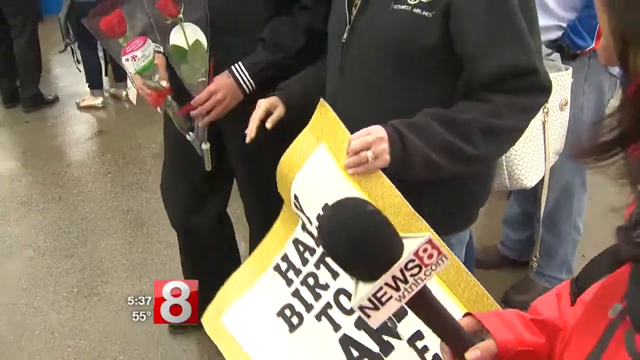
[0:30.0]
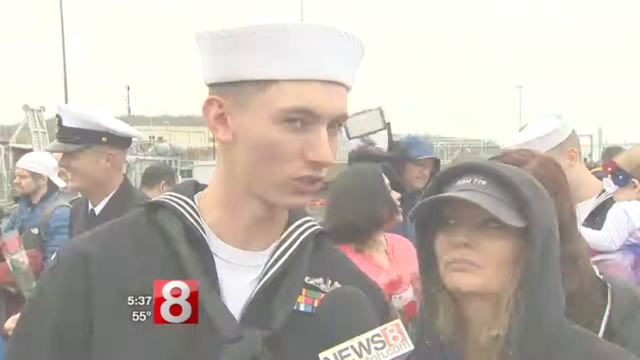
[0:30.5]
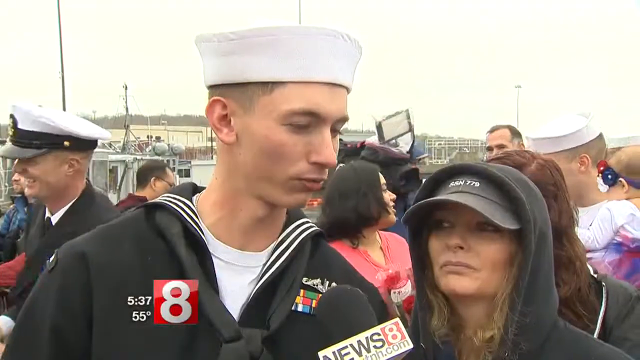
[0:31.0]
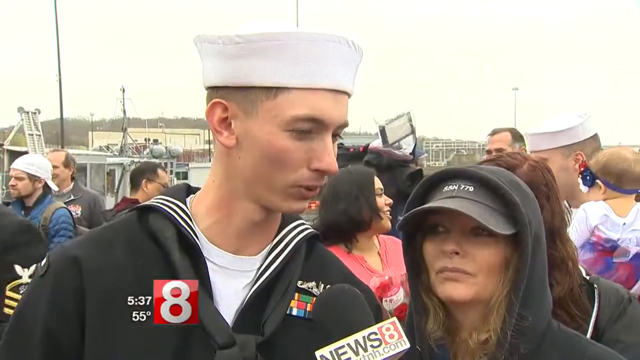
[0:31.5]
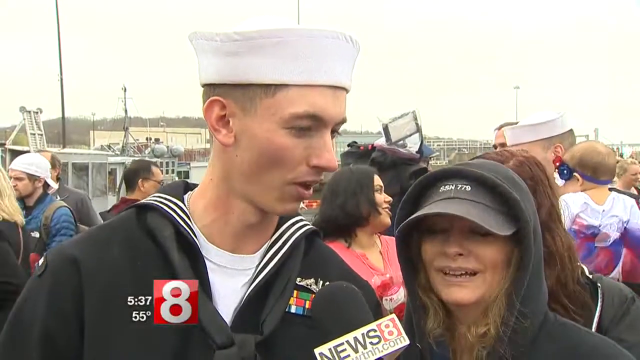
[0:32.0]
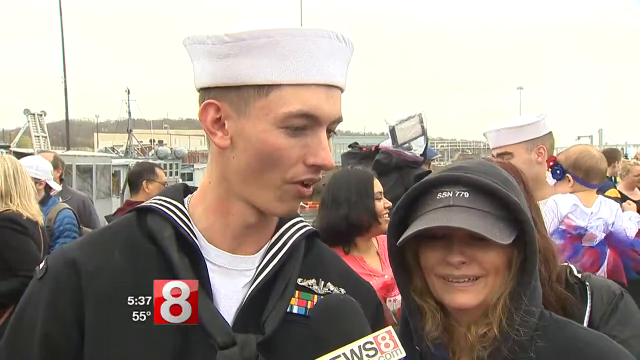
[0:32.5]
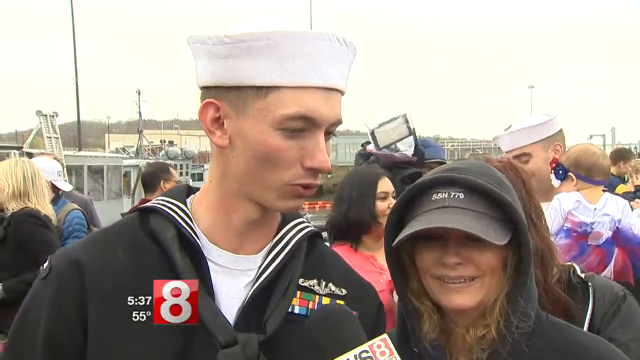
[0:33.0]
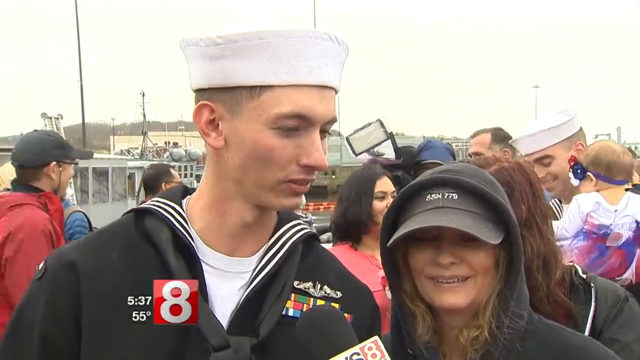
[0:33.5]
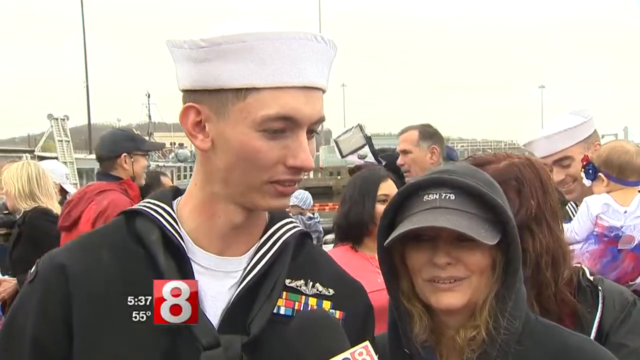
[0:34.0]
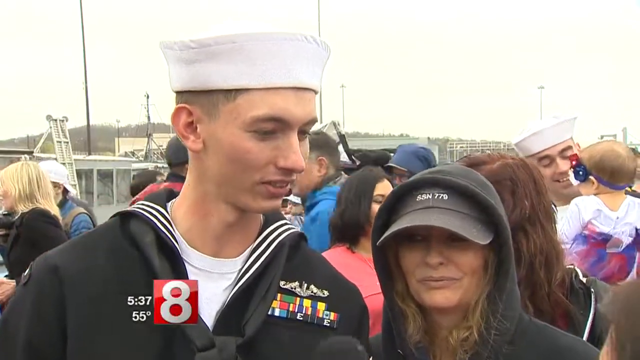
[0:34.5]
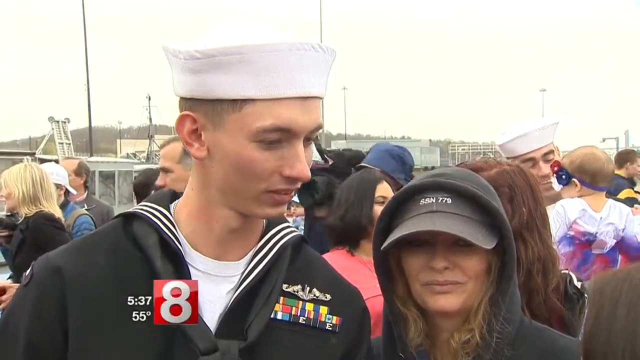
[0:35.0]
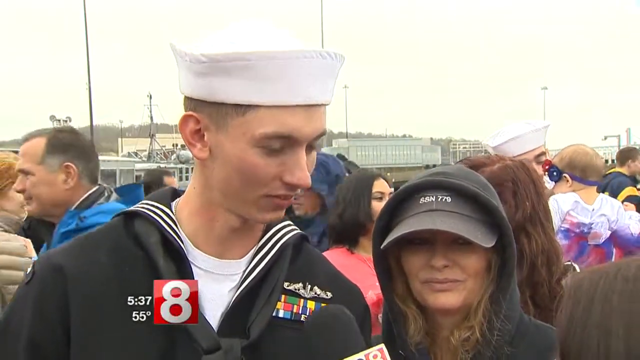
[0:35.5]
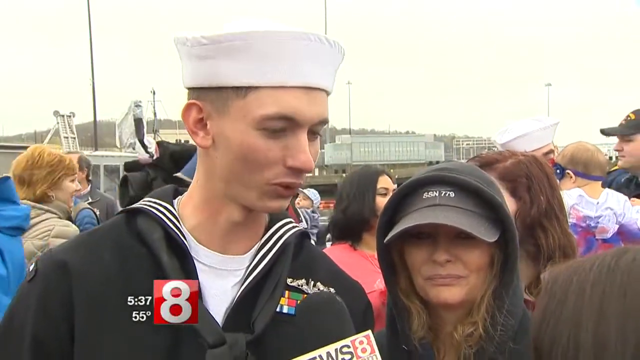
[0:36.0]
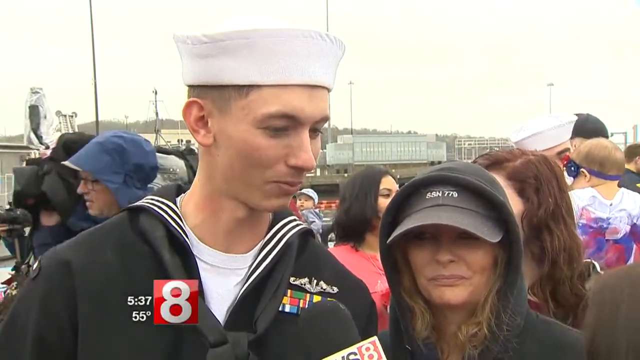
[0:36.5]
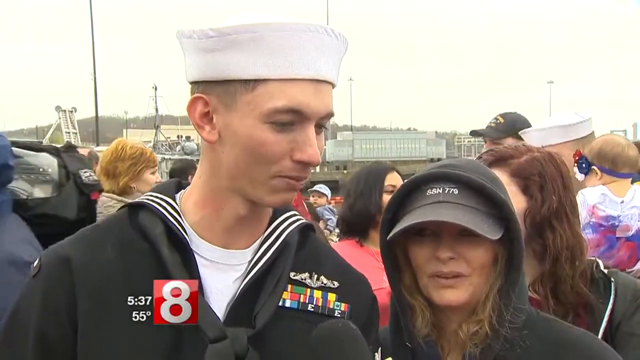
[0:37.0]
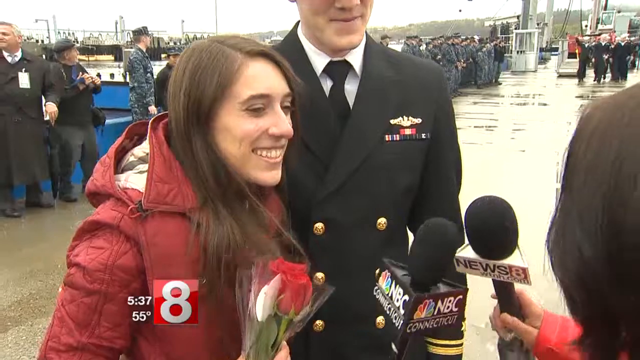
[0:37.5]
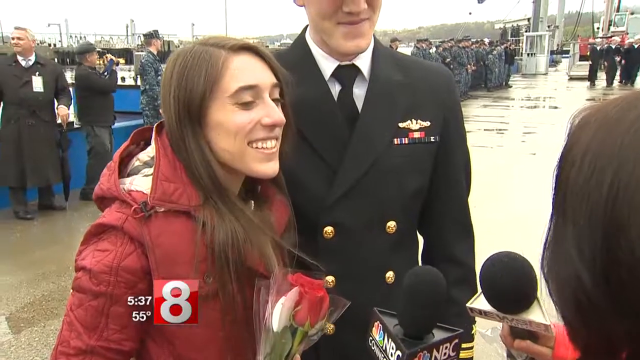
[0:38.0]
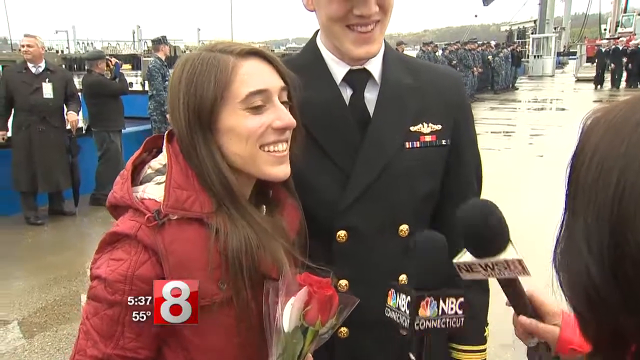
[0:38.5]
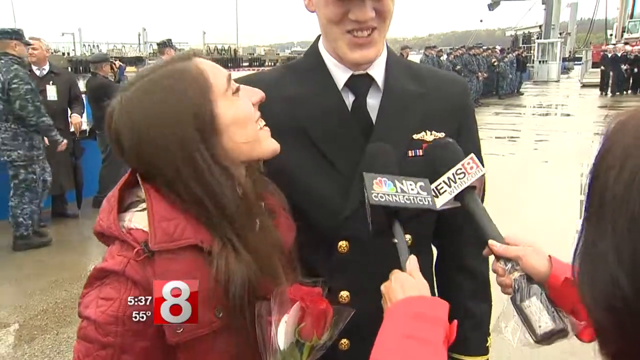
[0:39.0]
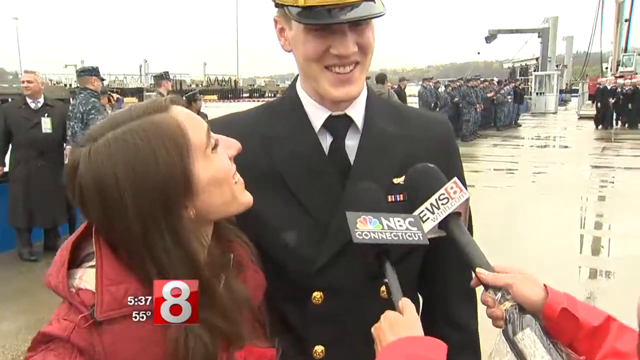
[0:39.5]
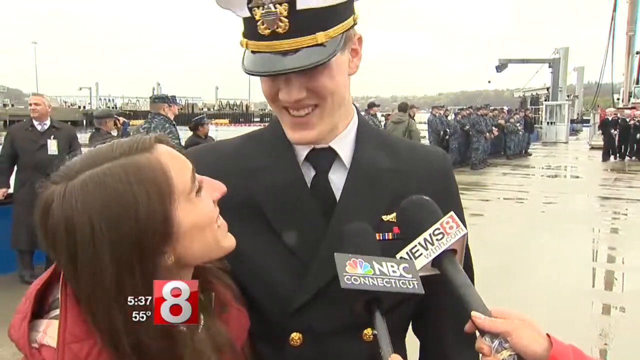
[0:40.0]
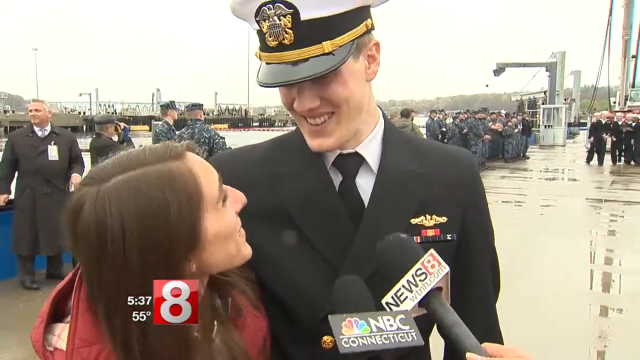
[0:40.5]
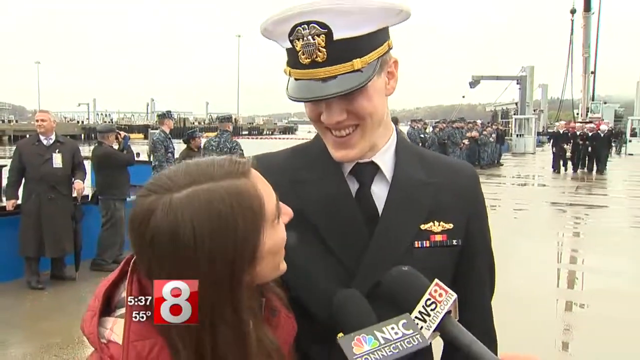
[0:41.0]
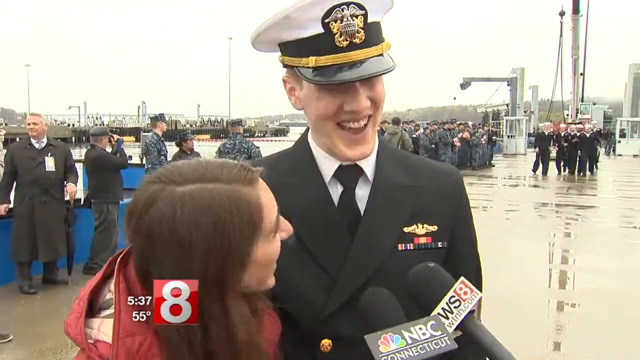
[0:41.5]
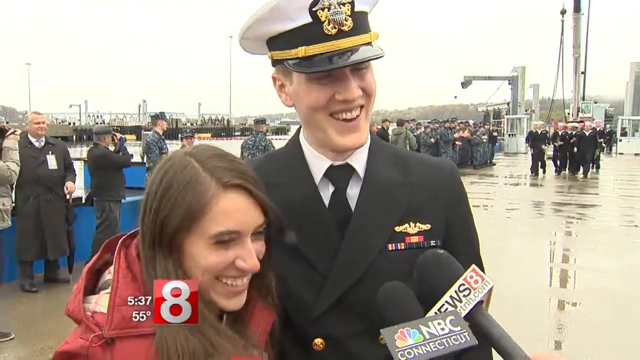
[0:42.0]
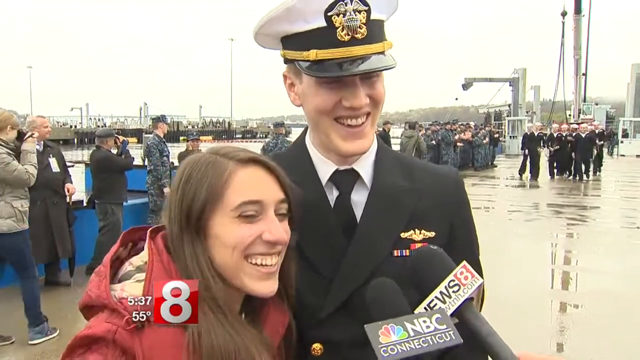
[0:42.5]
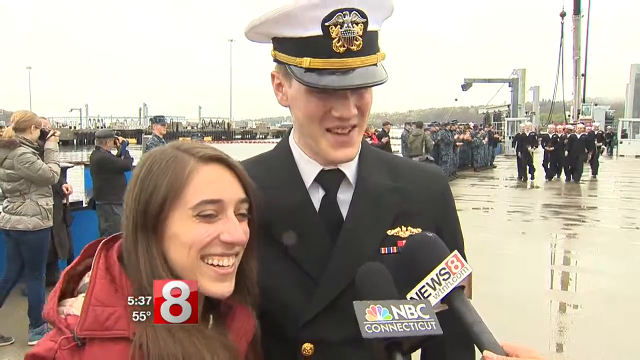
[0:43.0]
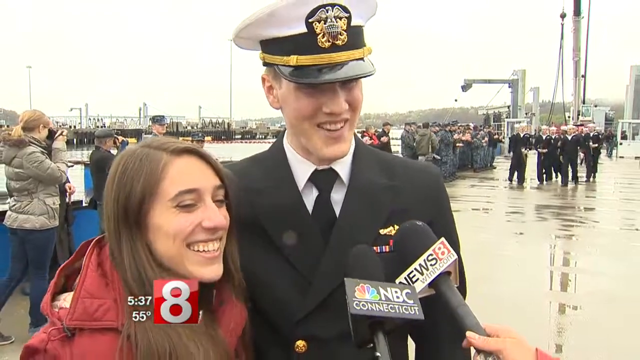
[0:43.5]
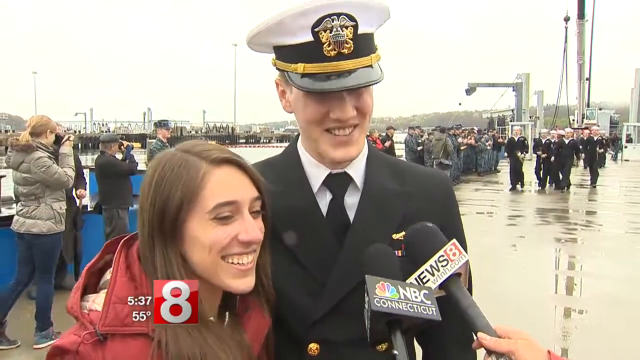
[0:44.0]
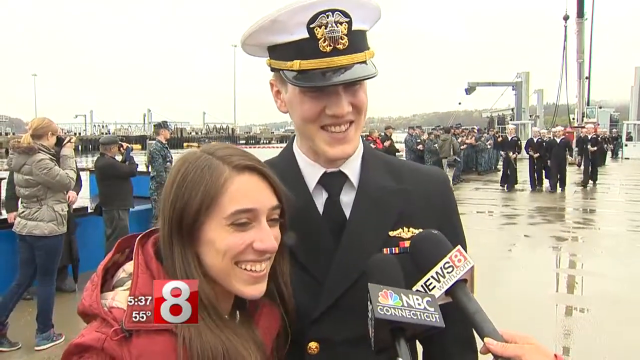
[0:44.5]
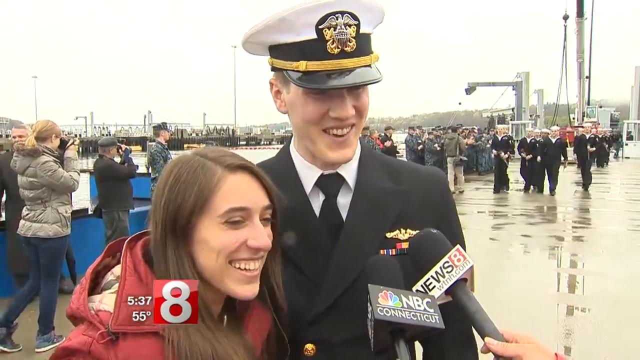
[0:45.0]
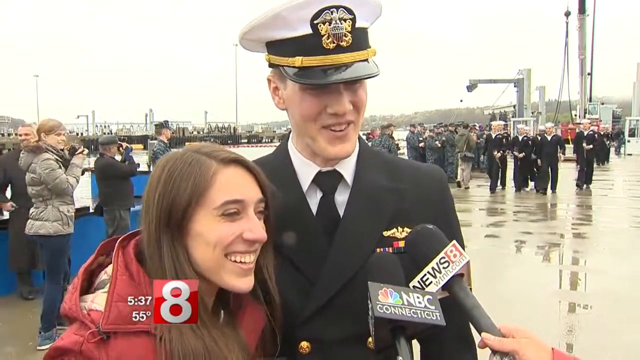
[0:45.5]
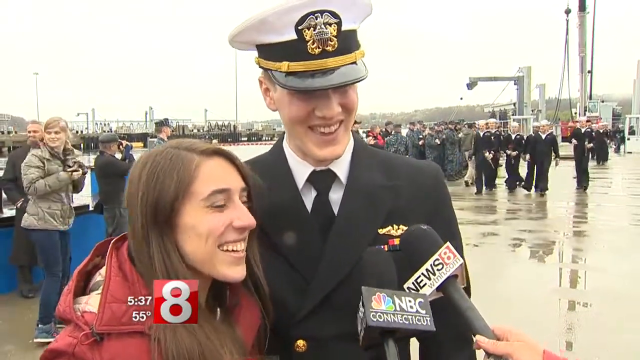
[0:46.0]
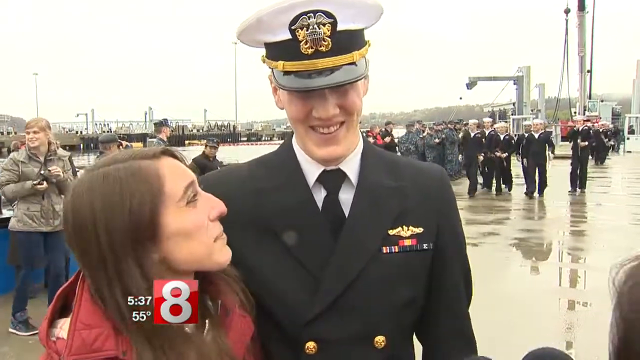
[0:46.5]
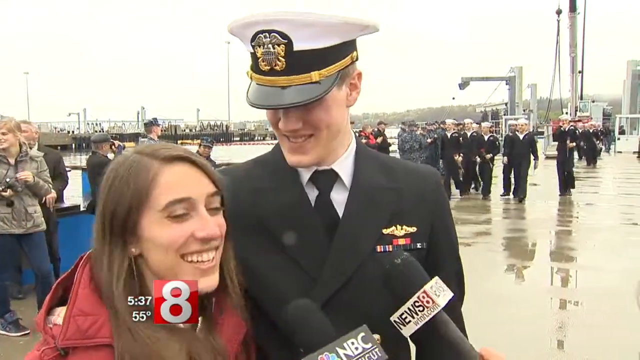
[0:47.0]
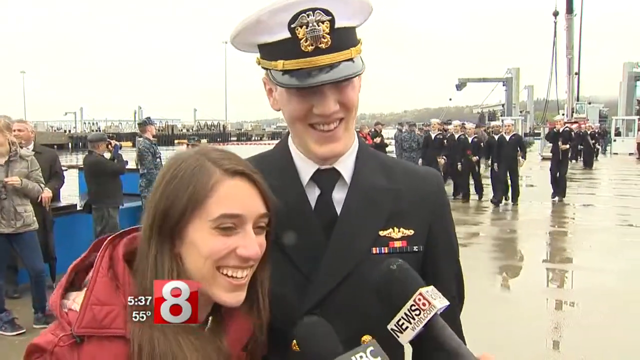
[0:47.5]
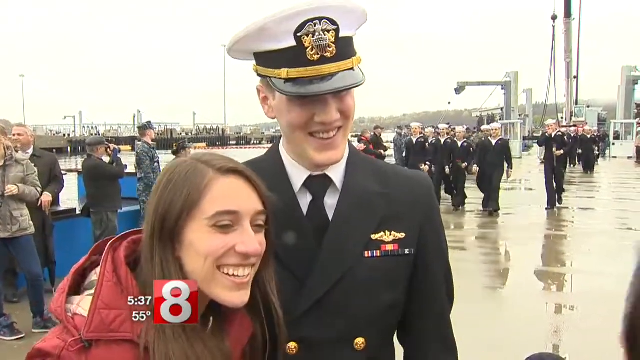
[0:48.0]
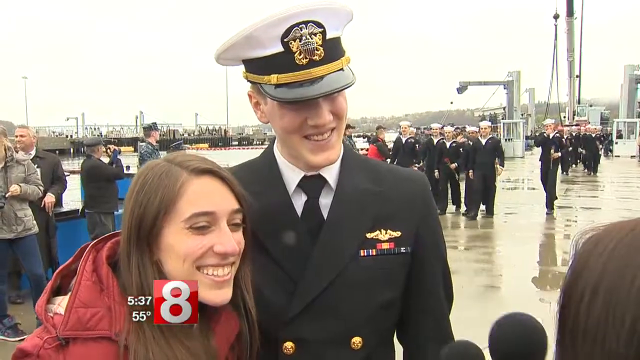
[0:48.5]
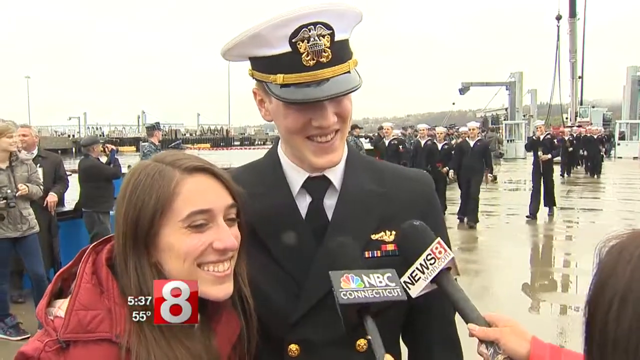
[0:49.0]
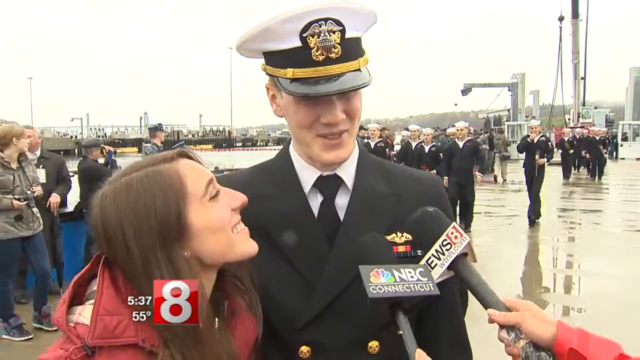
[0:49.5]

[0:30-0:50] As the reporter raises her microphone, the video cuts to a two-shot of a sailor on the left and his loved one on the right, maybe his mother. The sailor is almost one head taller than the woman, and he comments on the deployment as the reporter asks him questions. The video then cuts to a couple: the woman on the left wears a red winter coat, and the sailor on the right appears, by his uniform, to be an officer. The woman appears to be maybe his wife, and they are very happy, smiling continuously as they answer questions with two news organization microphones in front of them. Behind them, a group of sailors walks forward; in the middle ground there appear to be seven sailors, with another group further behind whose number is unclear.